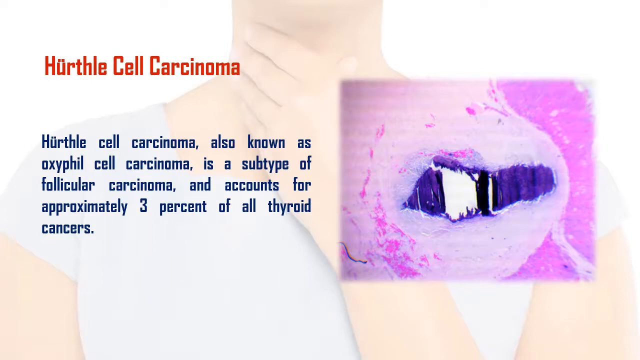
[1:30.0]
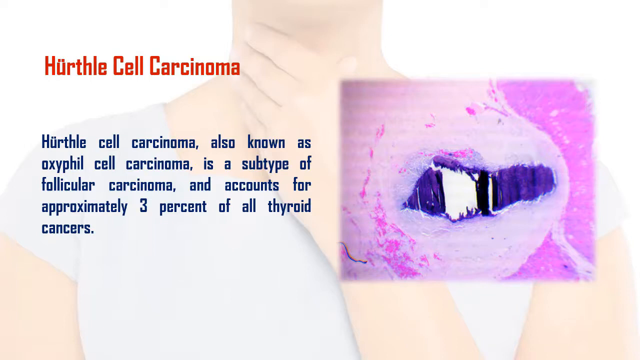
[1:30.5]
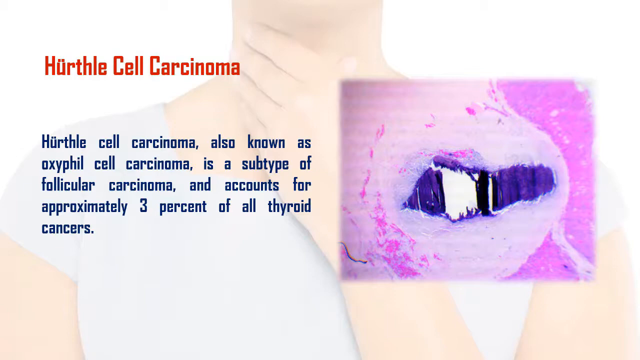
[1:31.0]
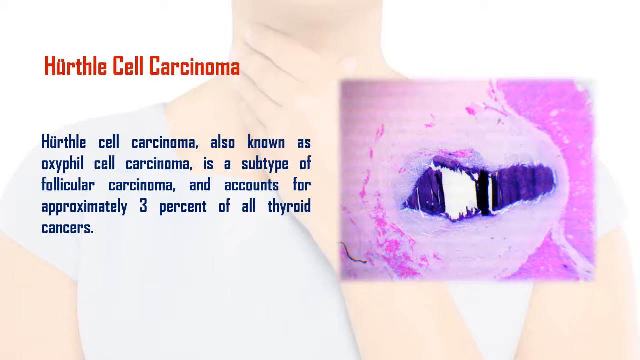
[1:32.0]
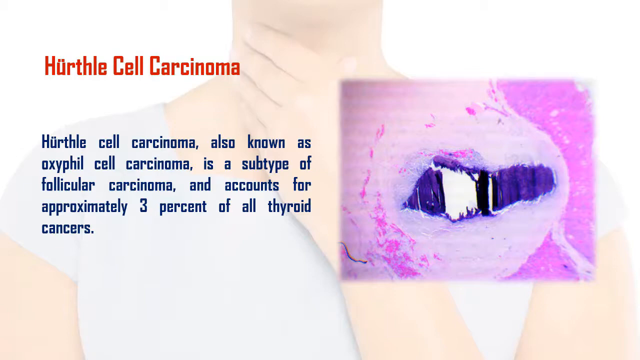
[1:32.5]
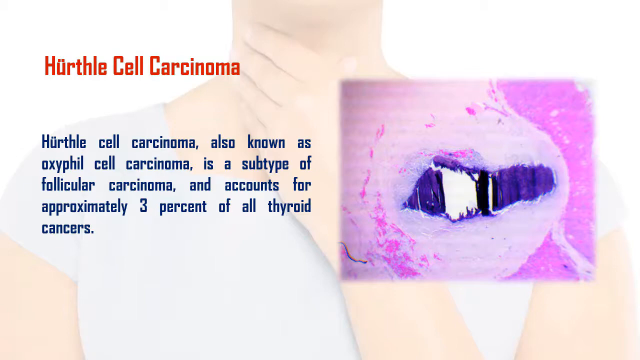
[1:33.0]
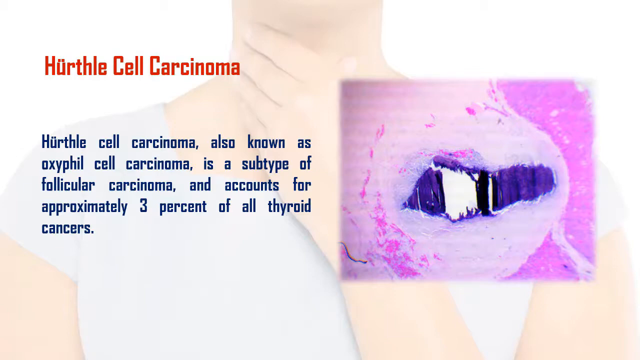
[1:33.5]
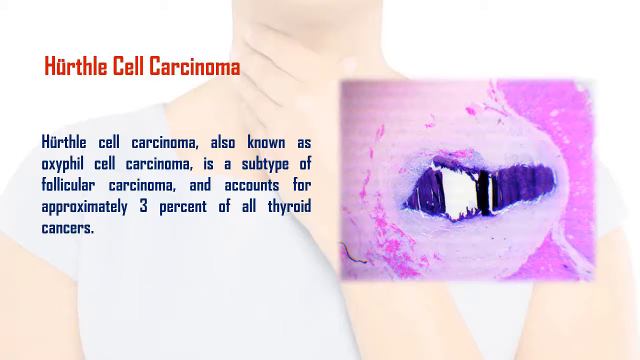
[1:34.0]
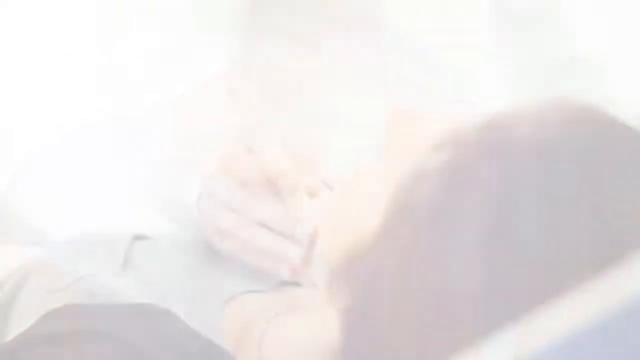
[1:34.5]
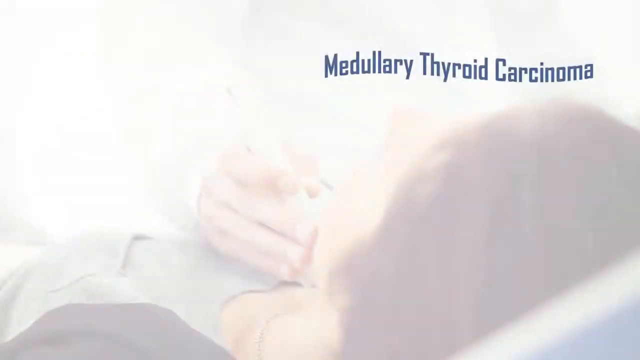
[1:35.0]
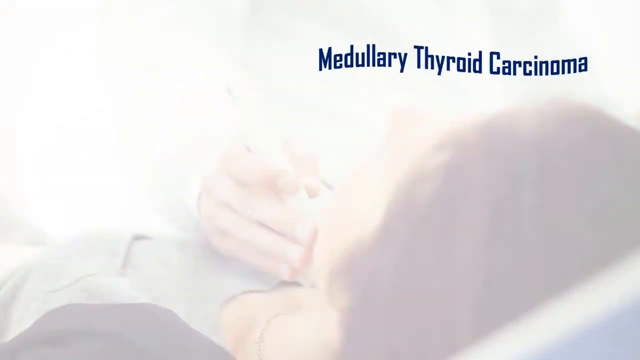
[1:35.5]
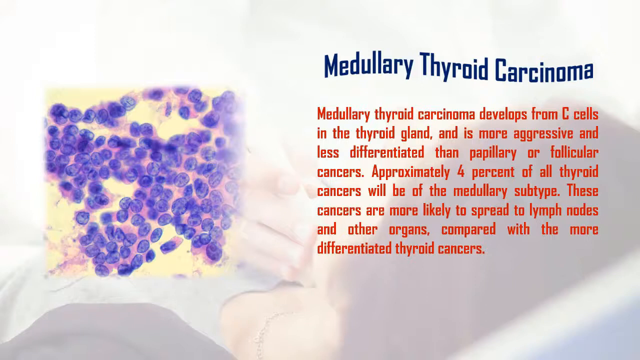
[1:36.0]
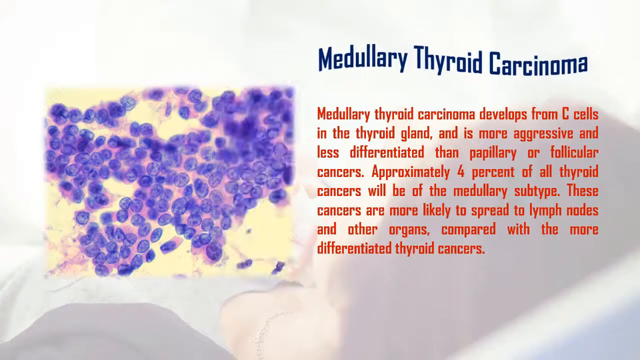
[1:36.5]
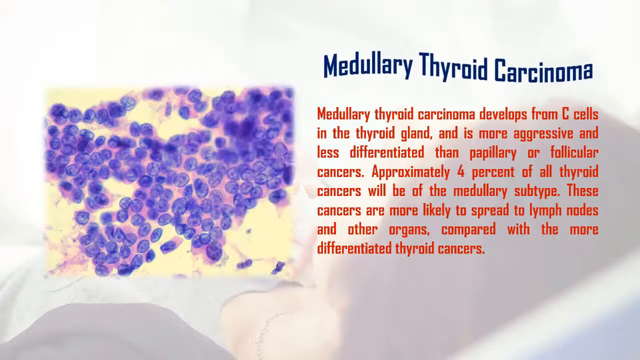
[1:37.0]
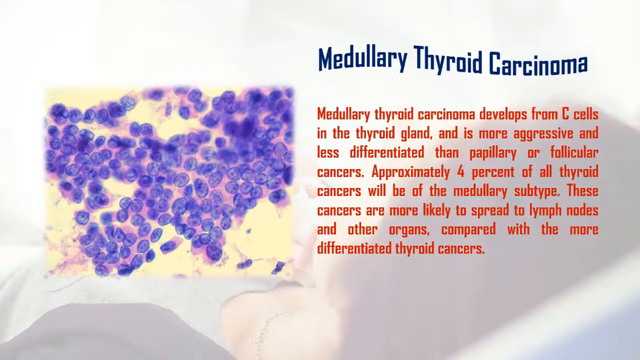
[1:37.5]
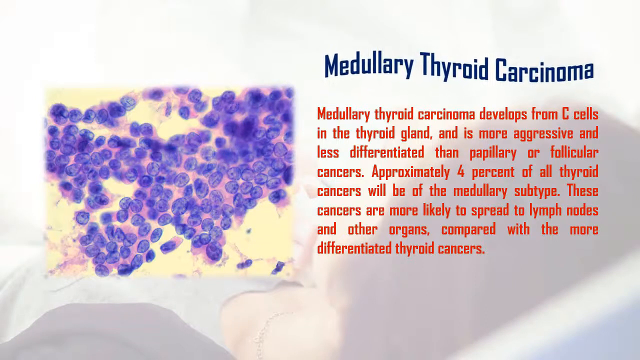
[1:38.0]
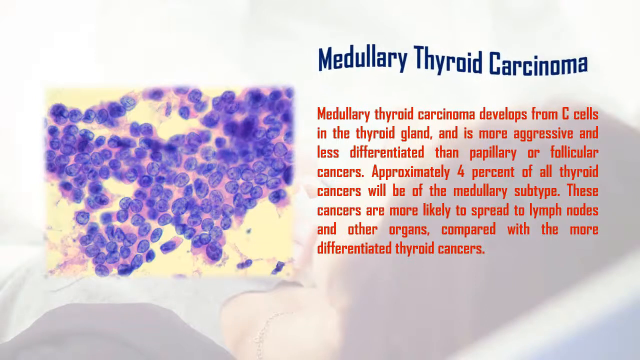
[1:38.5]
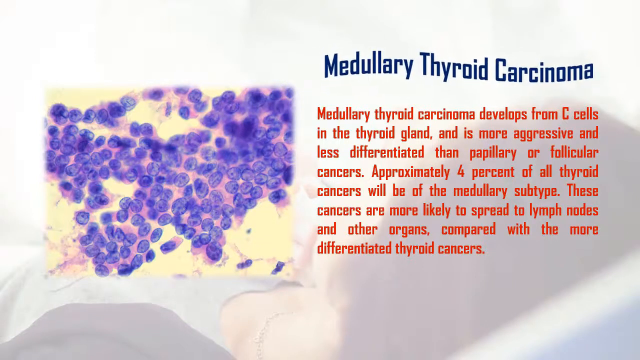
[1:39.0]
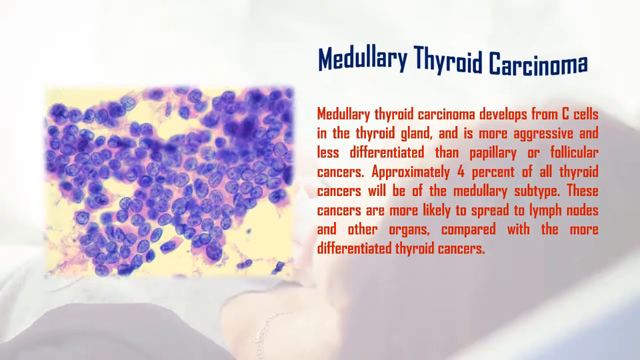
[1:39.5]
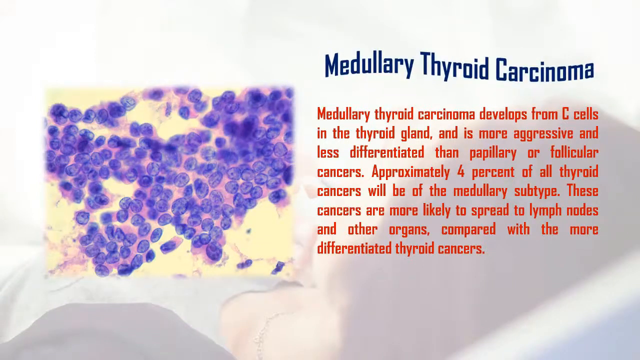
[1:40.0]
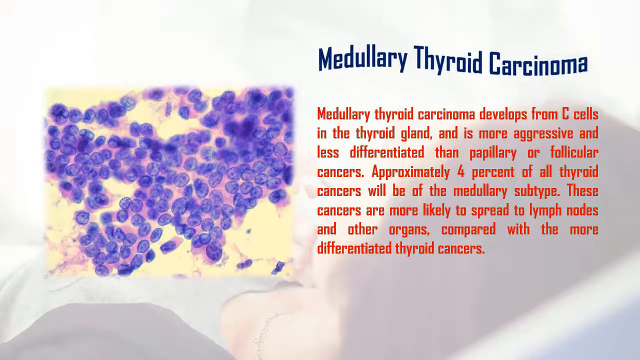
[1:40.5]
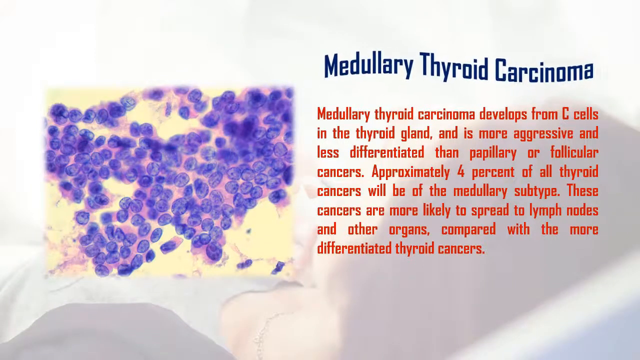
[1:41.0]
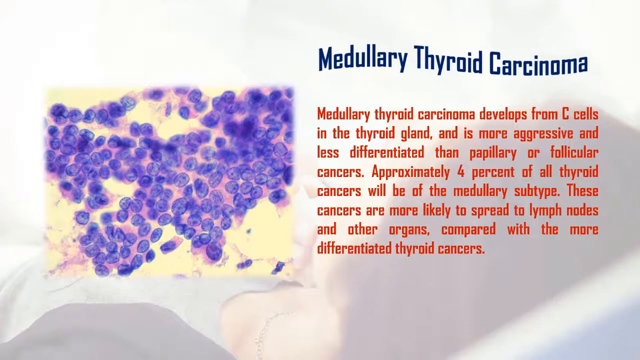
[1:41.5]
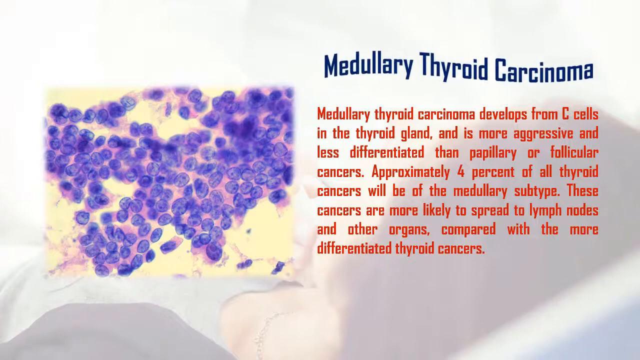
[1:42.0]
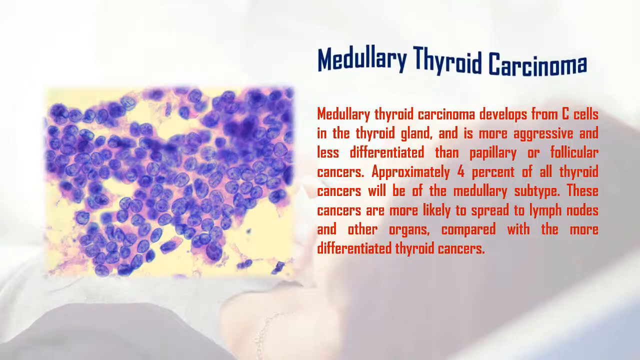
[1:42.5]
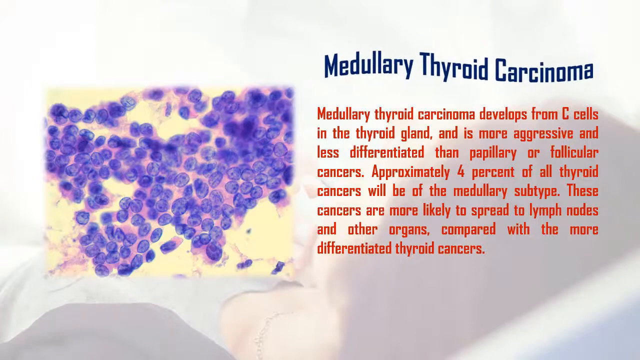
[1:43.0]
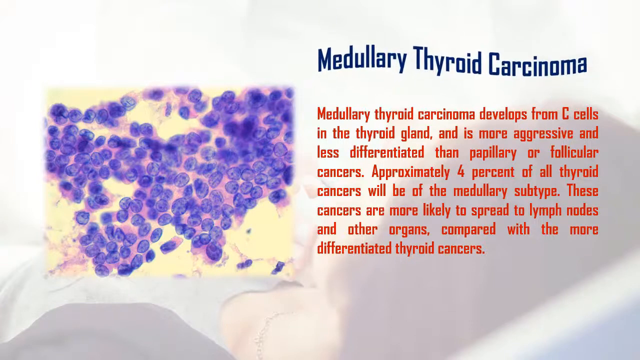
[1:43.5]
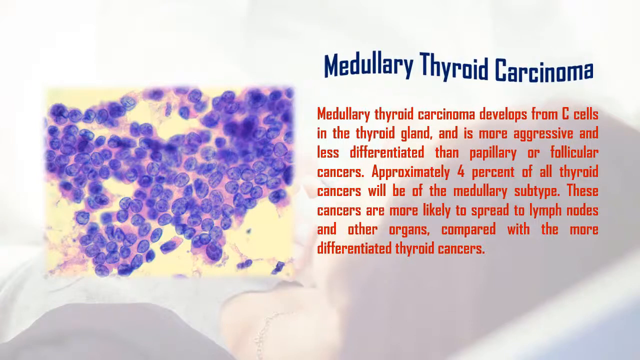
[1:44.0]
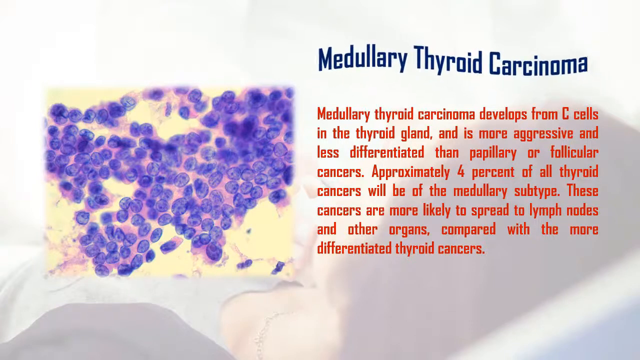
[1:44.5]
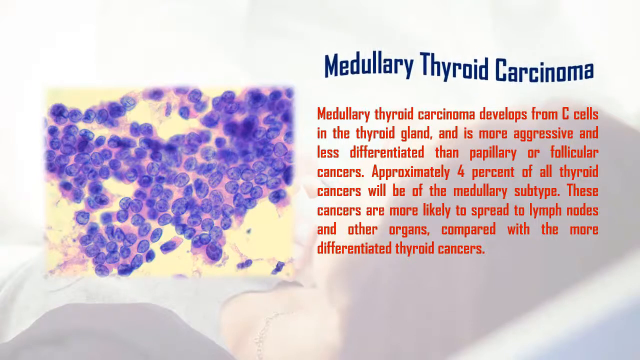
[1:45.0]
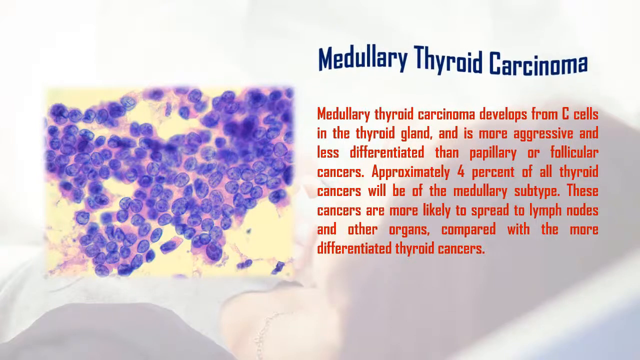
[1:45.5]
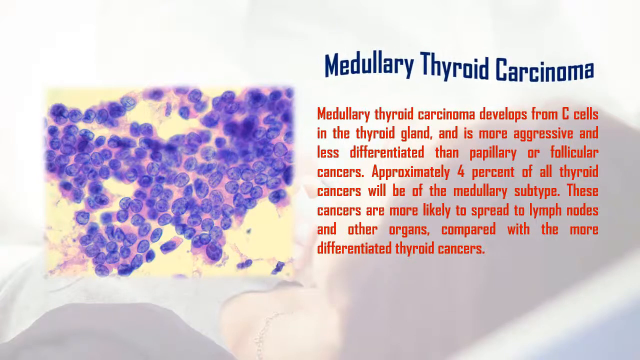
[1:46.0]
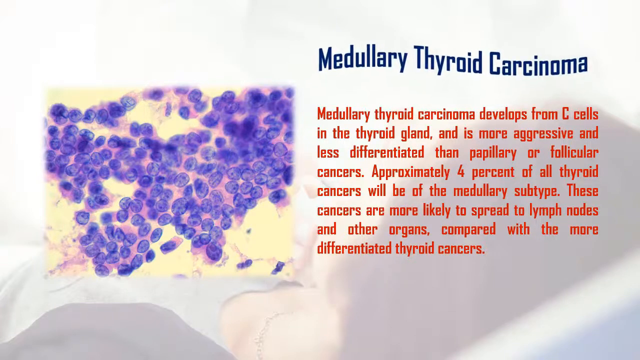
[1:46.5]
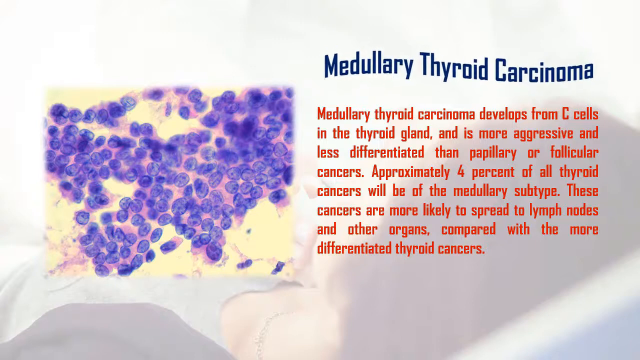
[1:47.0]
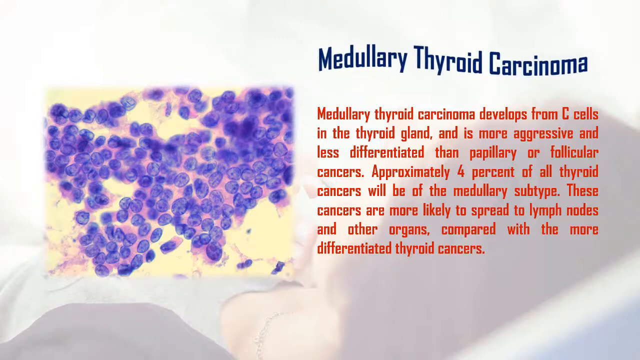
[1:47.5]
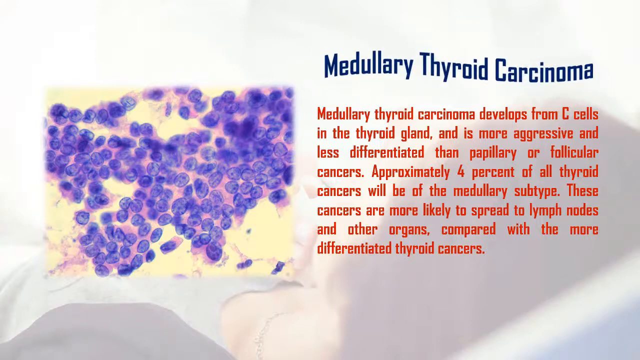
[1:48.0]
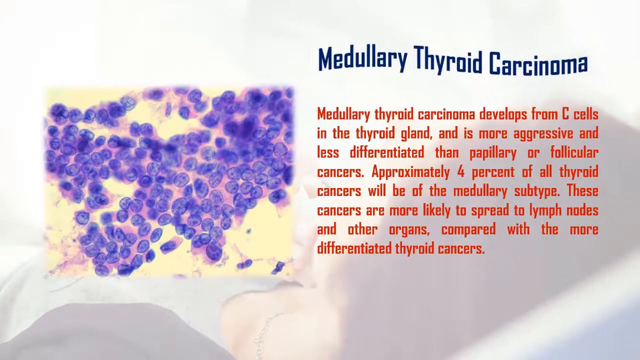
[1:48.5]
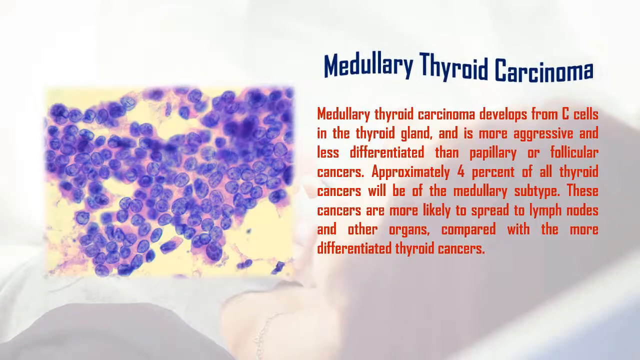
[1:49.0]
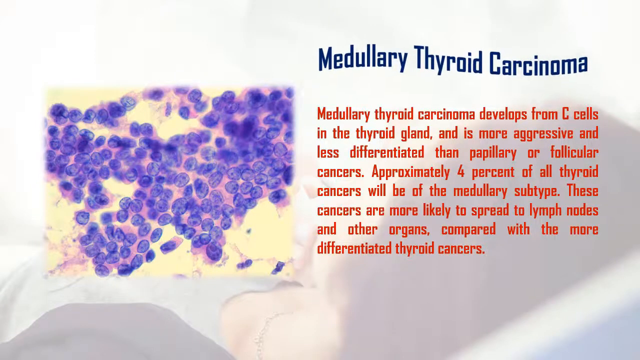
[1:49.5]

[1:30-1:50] The image shows a woman with pale Caucasian skin wearing a white t-shirt, holding her left hand across her body with her fingers touching where her thyroid gland would be on her neck. On the left side, red text reads "Hurthle cell carcinoma." Below it, smaller blue text reads "Hurthle cell carcinoma, also known as oxyphil cell carcinoma, is a subtype of follicular carcinoma and accounts for approximately 3% of all thyroid cancers." On the right is an image in purples and pinks of what this cancer looks like. The video then changes to information on medullary thyroid carcinoma, with "medullary thyroid carcinoma" written in blue text in the upper right corner. On the left is an image set in yellow, as if looking at the cells, with the cells highlighted in purple against a pink background. To the right of the cell image, text reads "medullary thyroid carcinoma develops from c cells in the thyroid gland and is much more aggressive and less differentiated than papillary or follicular cancers."